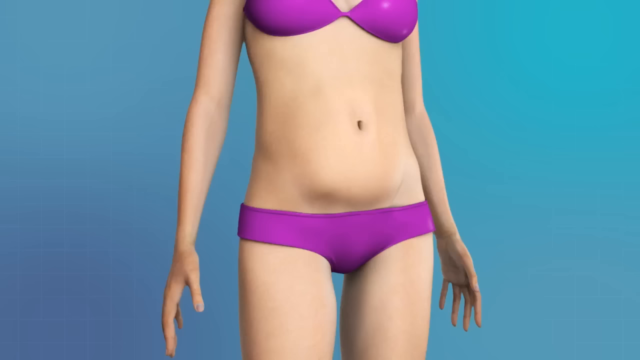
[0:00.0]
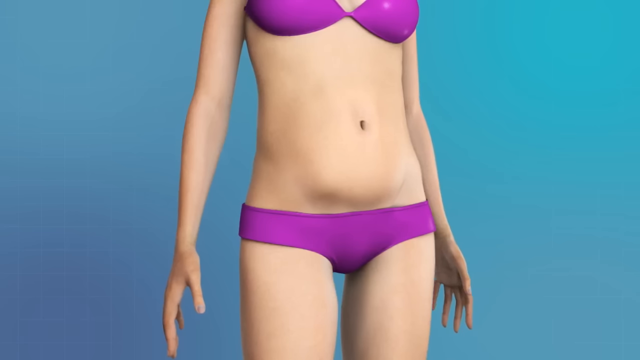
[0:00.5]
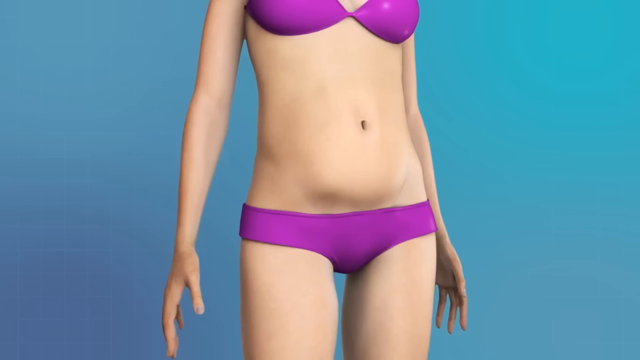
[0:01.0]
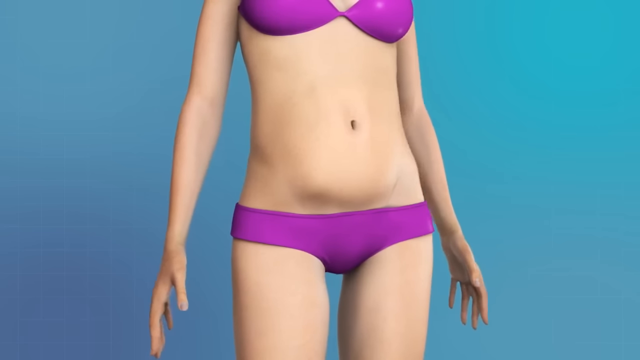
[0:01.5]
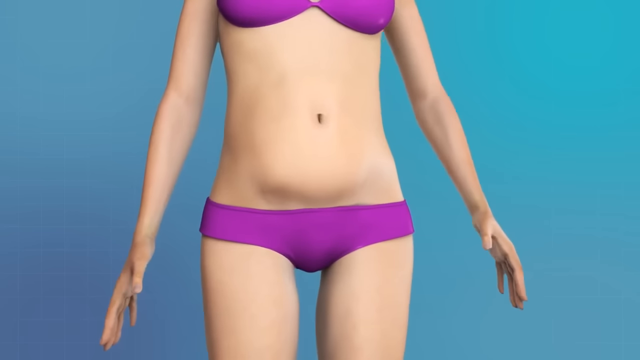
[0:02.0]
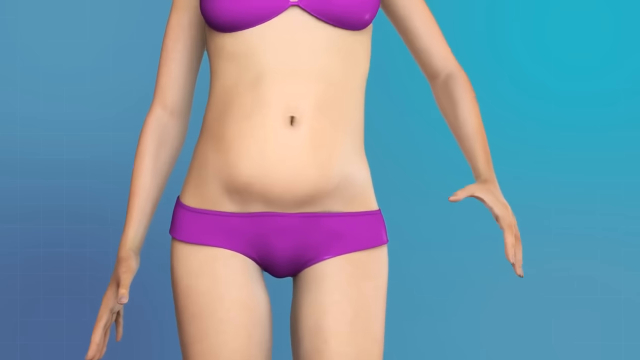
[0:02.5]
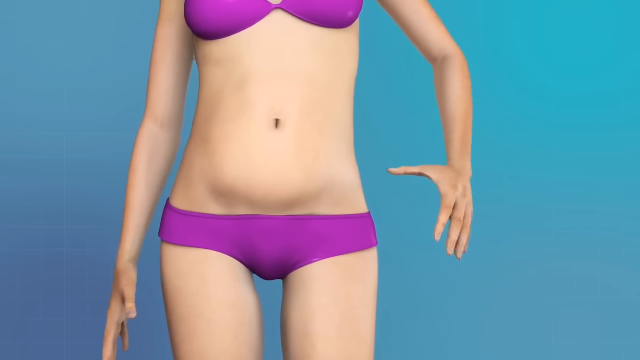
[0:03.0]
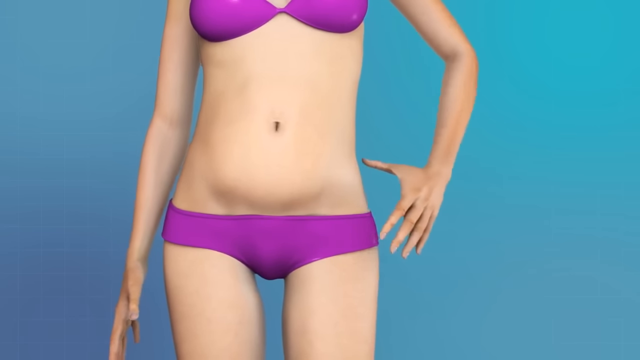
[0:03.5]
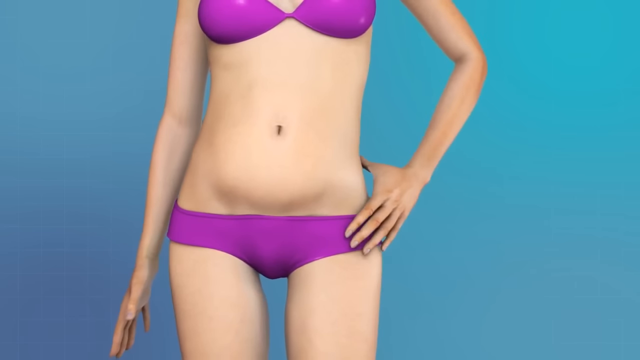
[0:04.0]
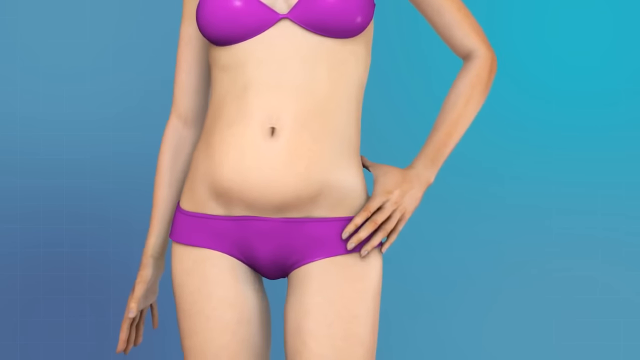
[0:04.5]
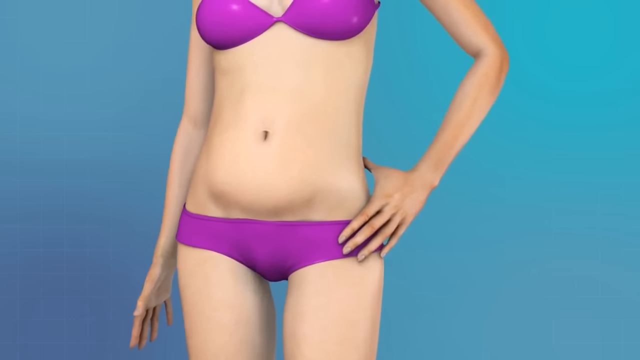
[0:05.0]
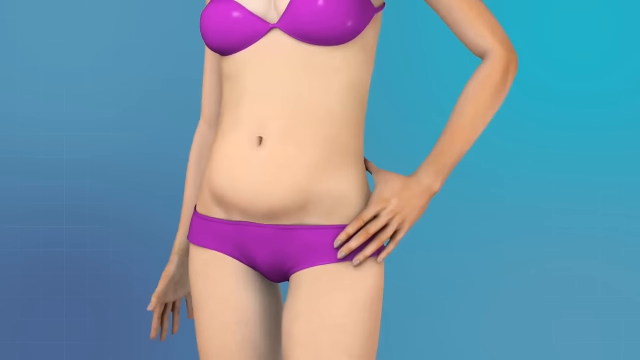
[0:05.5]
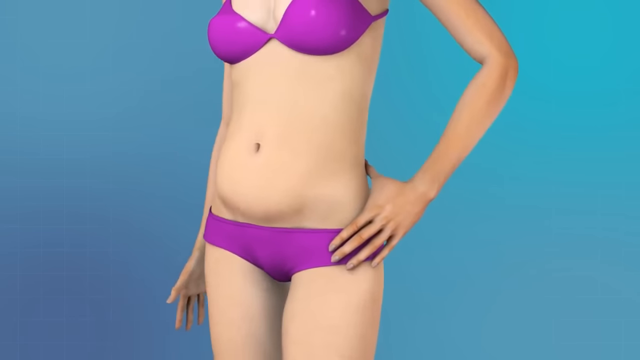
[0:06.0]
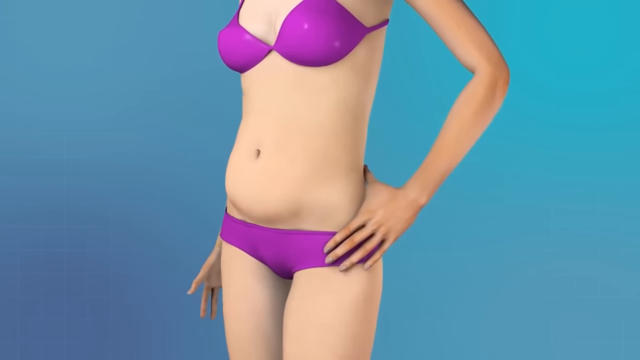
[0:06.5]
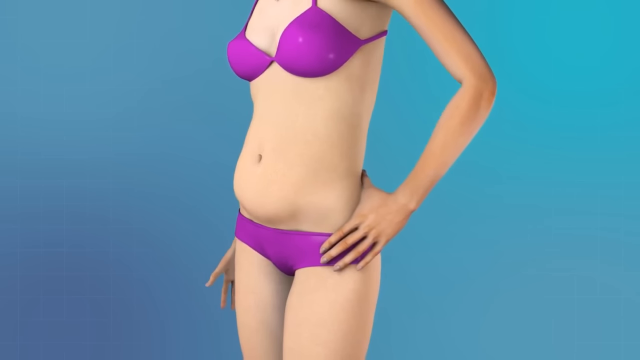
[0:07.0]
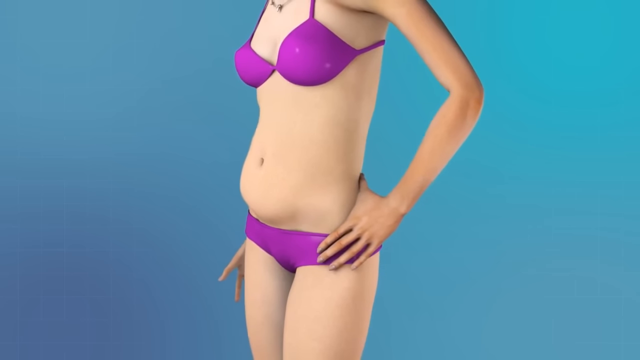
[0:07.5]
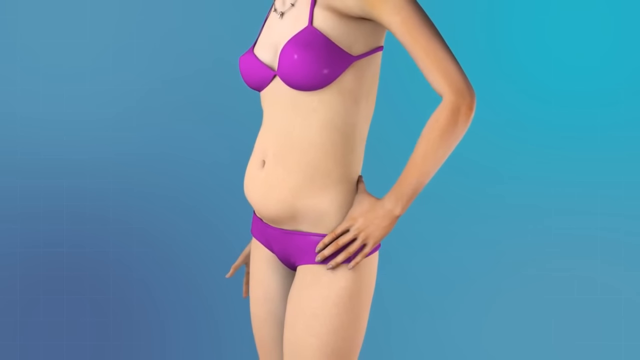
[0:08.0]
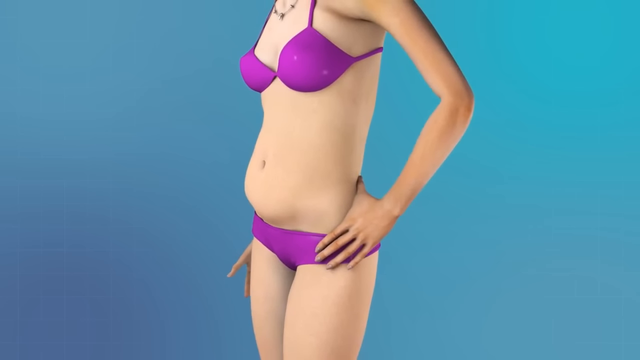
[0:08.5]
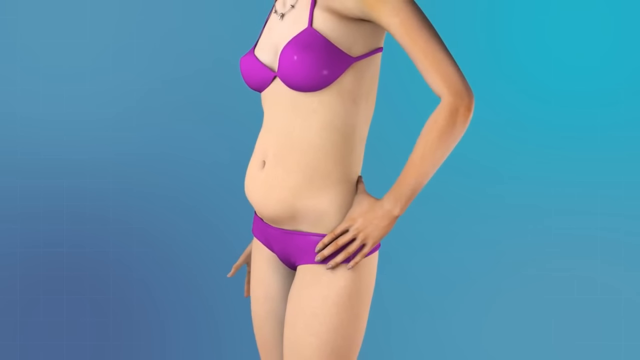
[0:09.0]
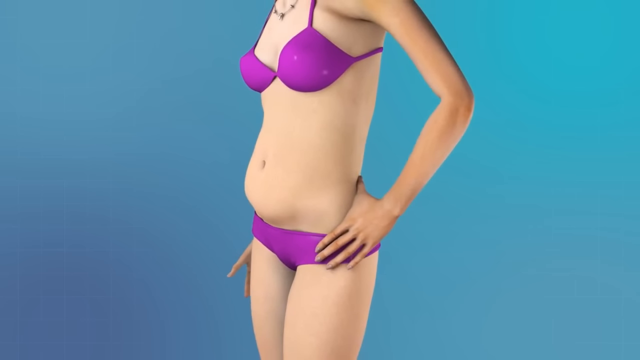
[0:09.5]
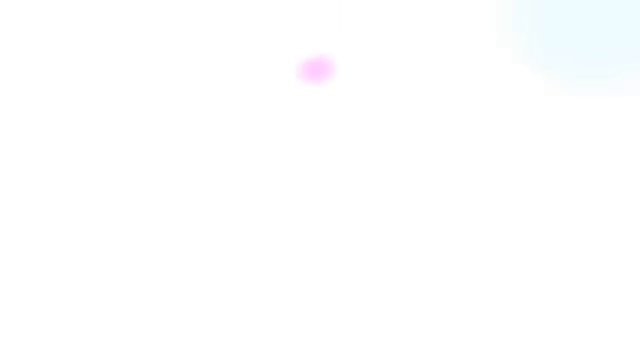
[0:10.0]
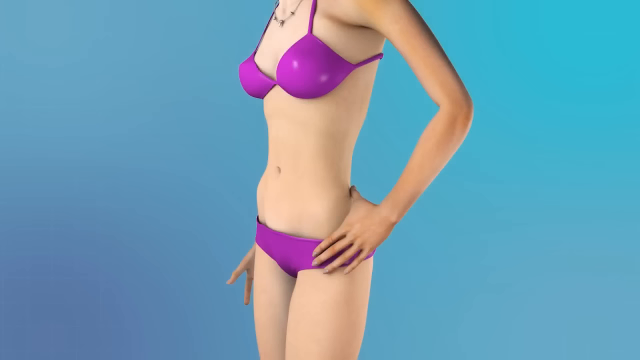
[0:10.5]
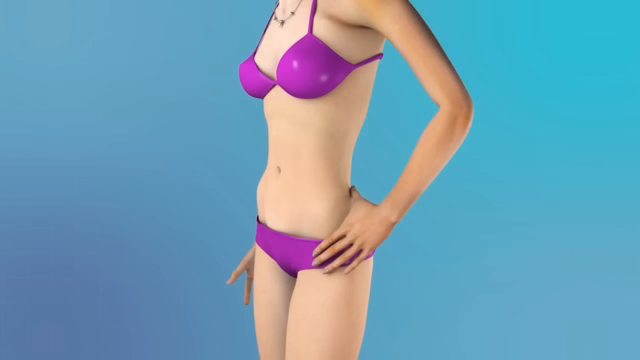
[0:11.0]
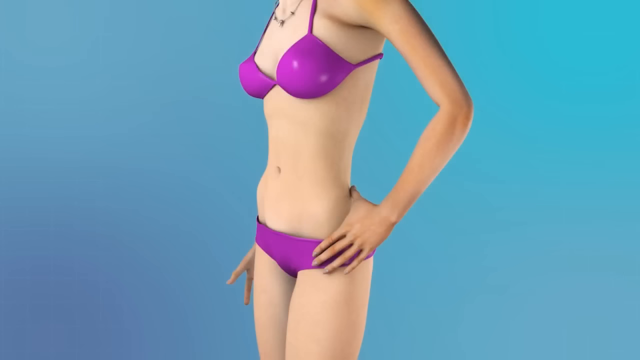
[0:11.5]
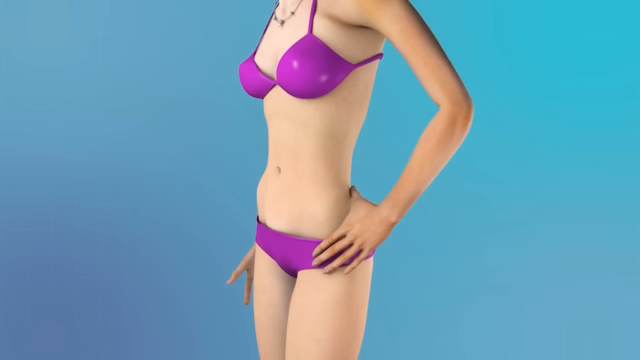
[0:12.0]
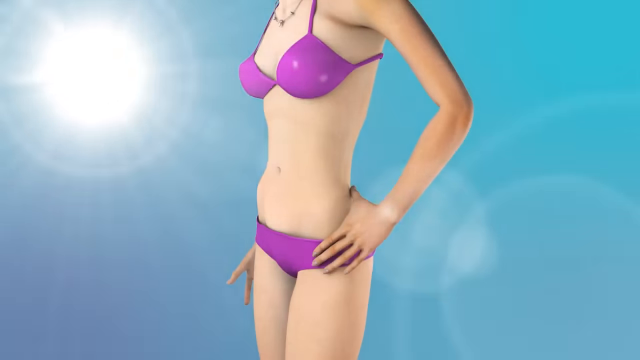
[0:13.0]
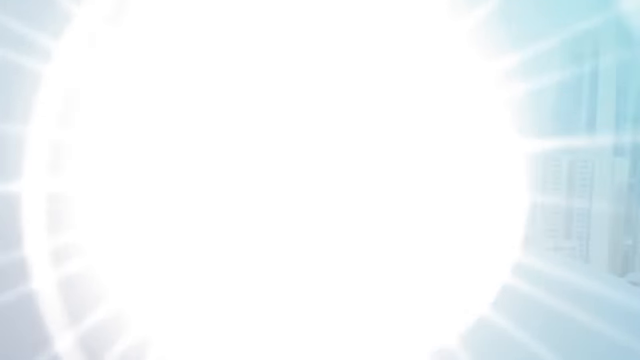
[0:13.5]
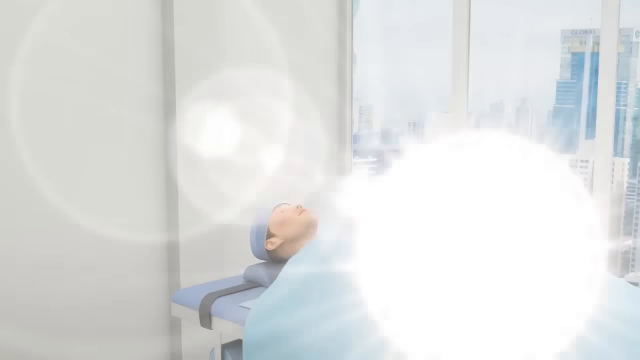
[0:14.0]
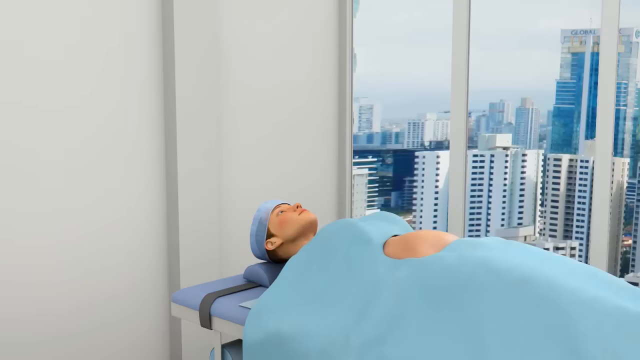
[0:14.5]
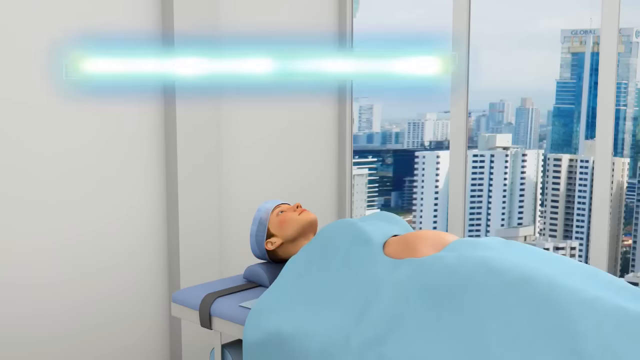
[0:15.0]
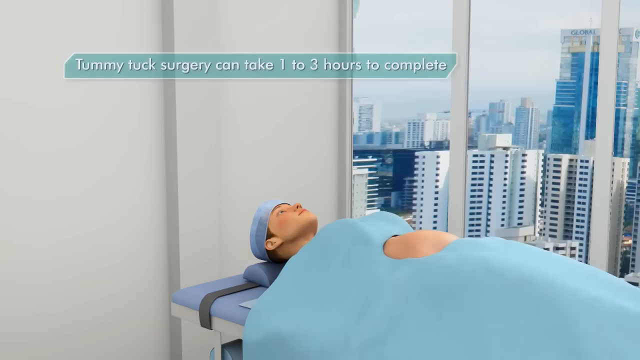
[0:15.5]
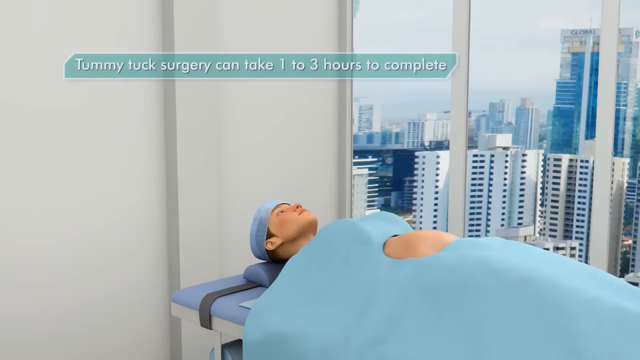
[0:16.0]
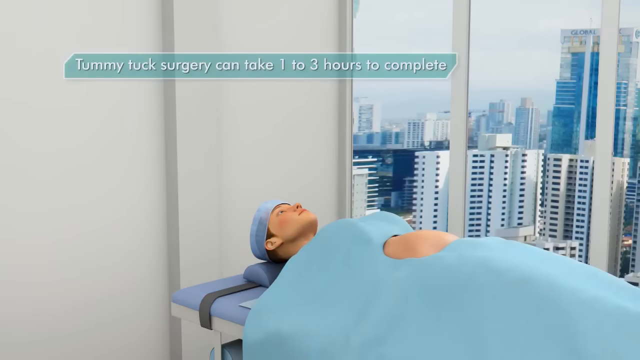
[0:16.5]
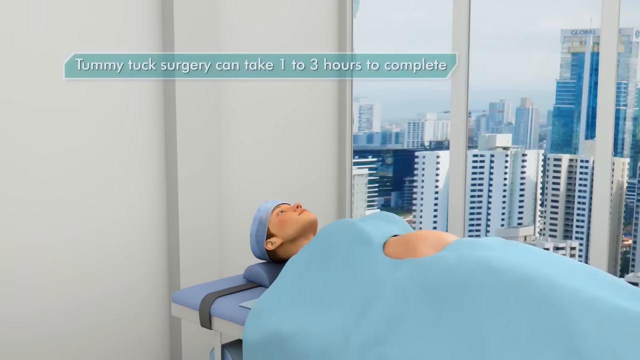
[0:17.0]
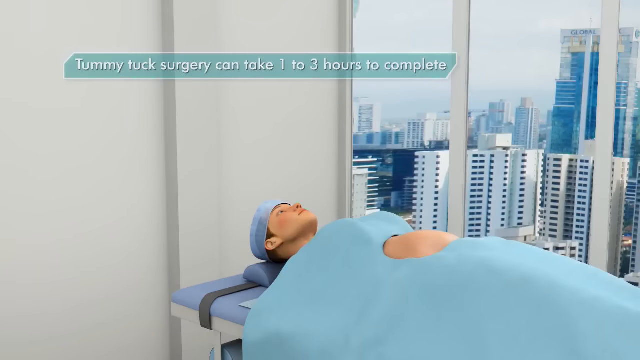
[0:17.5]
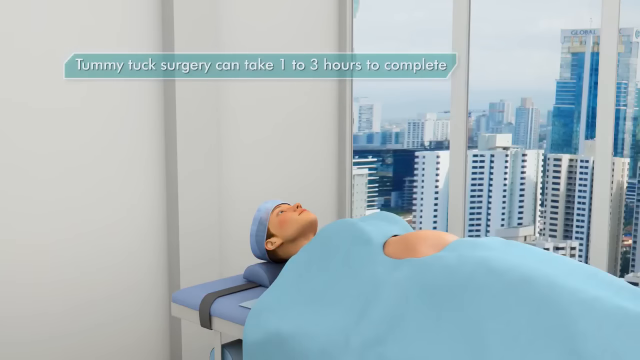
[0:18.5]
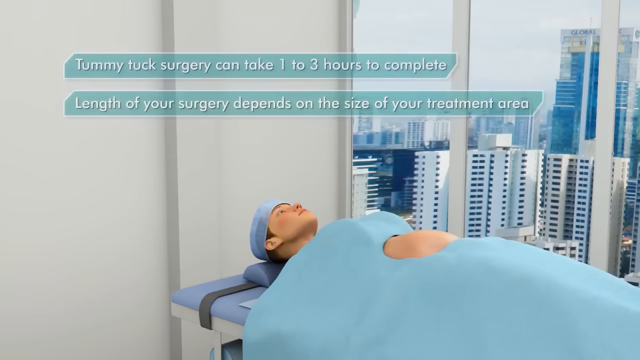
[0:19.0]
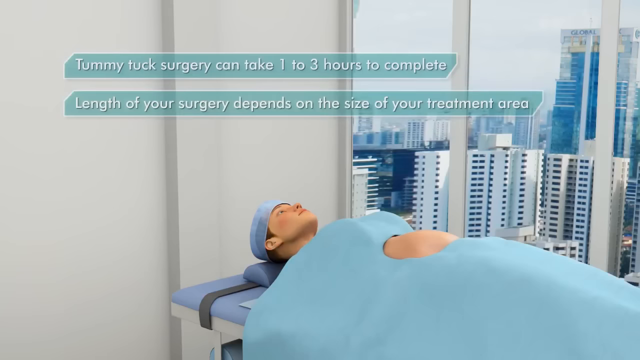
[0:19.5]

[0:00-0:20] A woman's torso is visible in the middle of the screen, against a lighter blue background on both sides, almost a deep sky blue. She is visible from her thighs up to the middle of her breasts, and both hands hang by her sides with her palms facing her legs. She wears a purplish-pink bikini with rather small pants that go only to below her tummy; her stomach extends slightly in a curve, and the bikini pants sit under that curve. The bikini top is the same colour and is visible only up to nipple height. She moves and rotates a little, first seen from the front and then from her left side, and she places her hand on her hip and strikes a sideways pose. She is wearing a necklace. The video then cuts to her in the same position after having lost a lot of weight, her tummy much smaller.